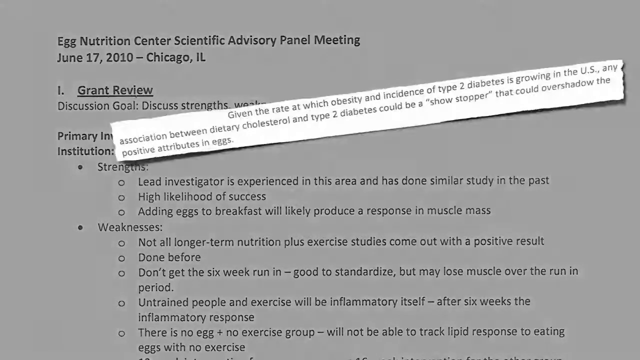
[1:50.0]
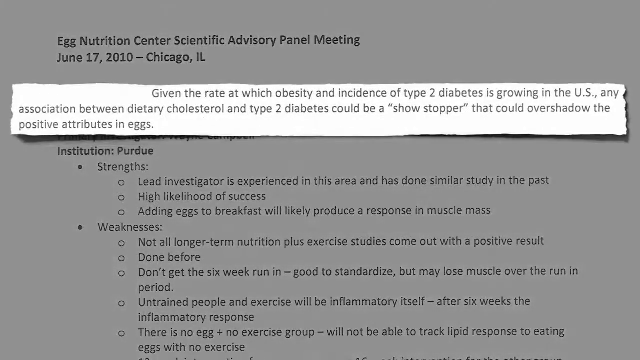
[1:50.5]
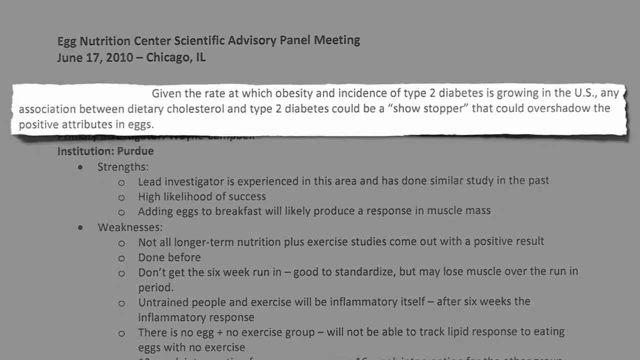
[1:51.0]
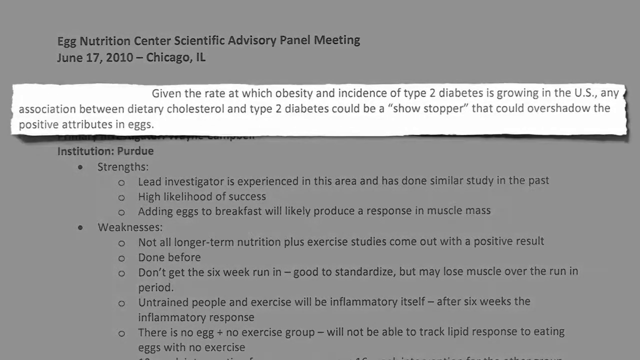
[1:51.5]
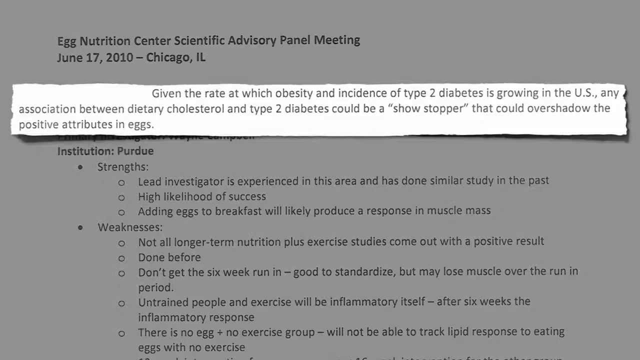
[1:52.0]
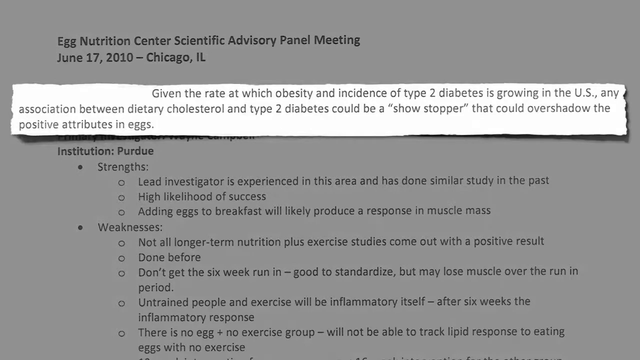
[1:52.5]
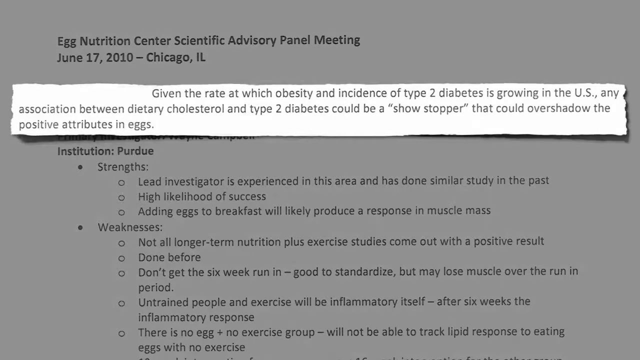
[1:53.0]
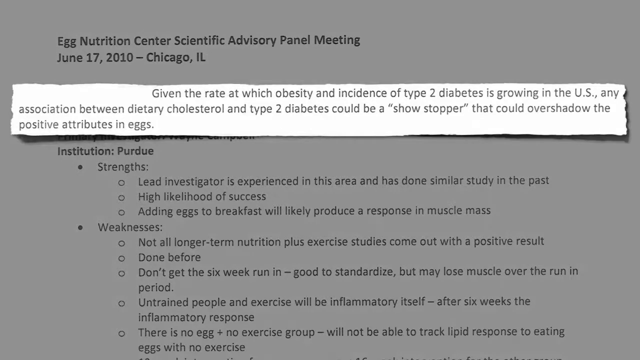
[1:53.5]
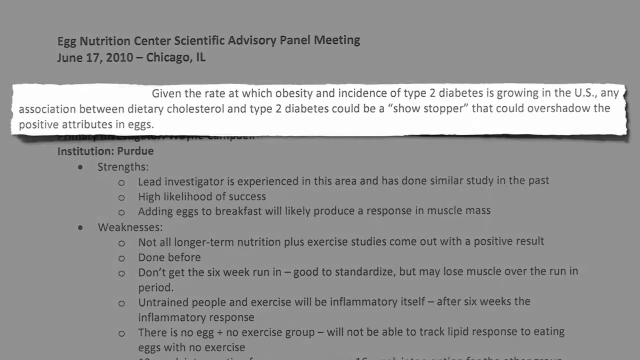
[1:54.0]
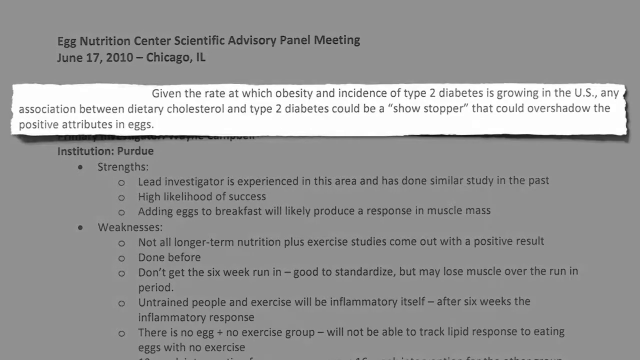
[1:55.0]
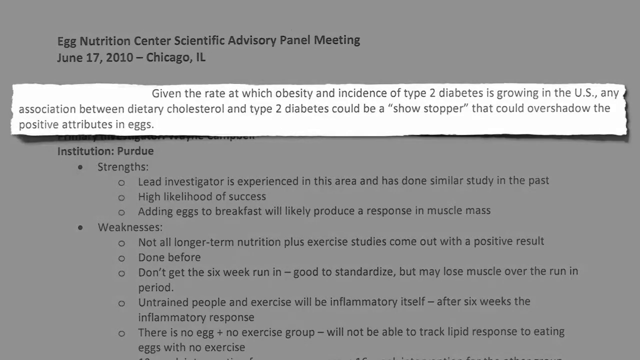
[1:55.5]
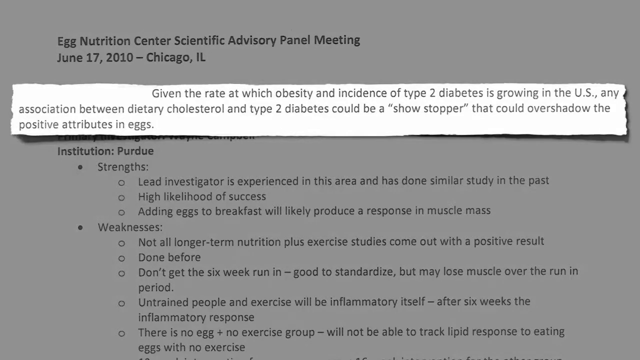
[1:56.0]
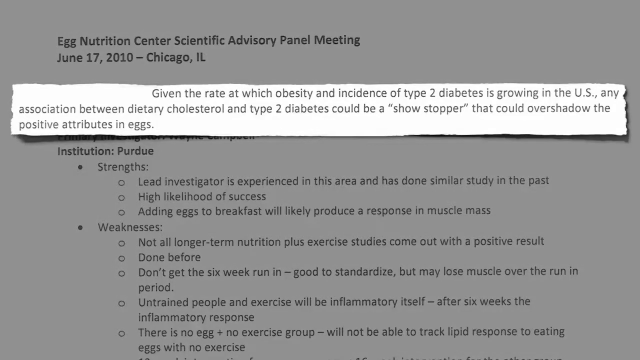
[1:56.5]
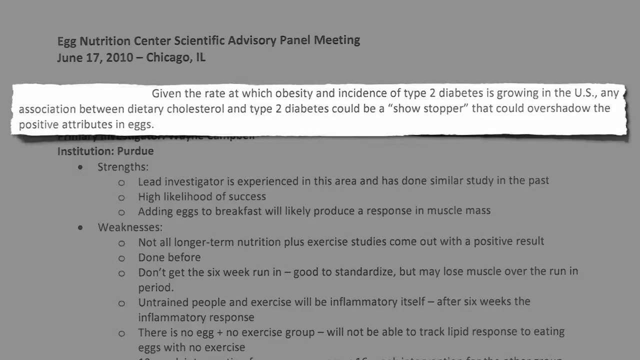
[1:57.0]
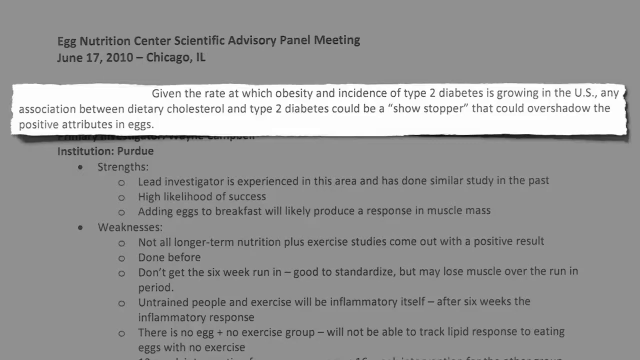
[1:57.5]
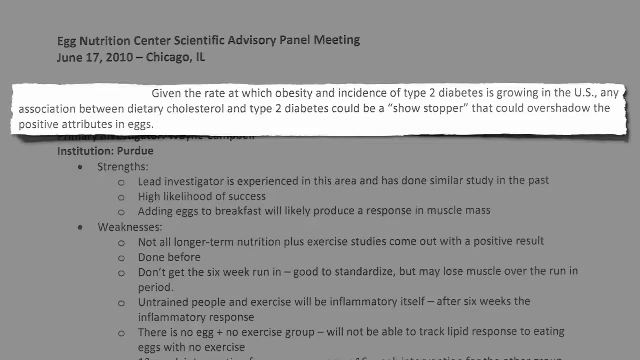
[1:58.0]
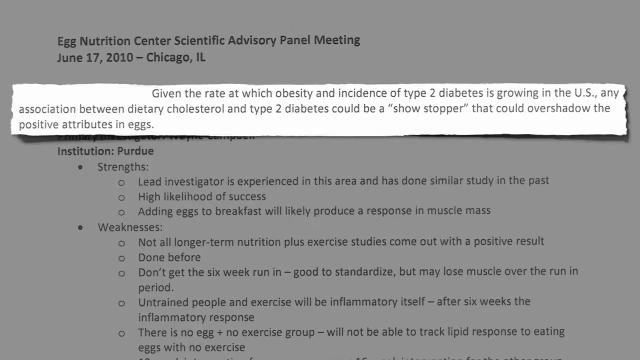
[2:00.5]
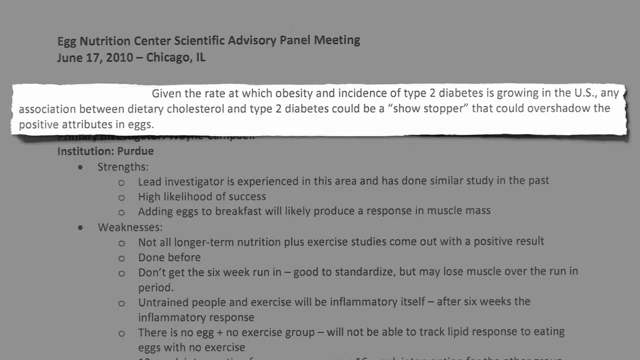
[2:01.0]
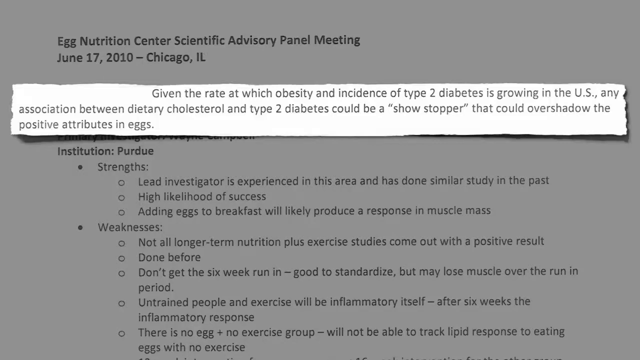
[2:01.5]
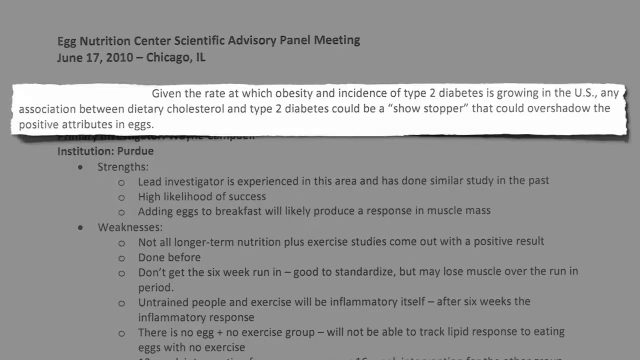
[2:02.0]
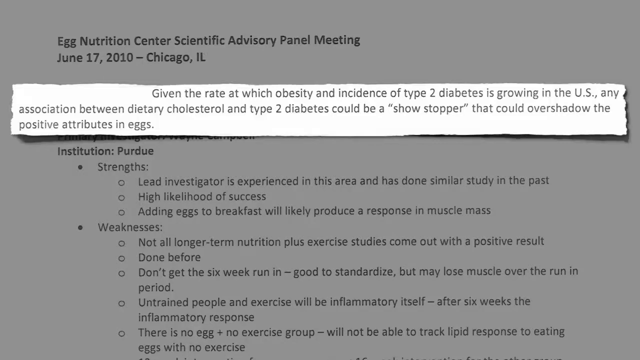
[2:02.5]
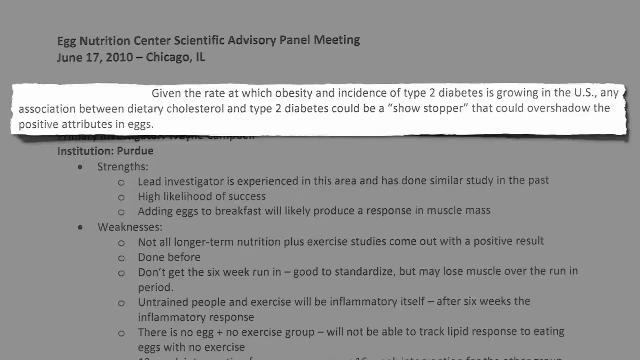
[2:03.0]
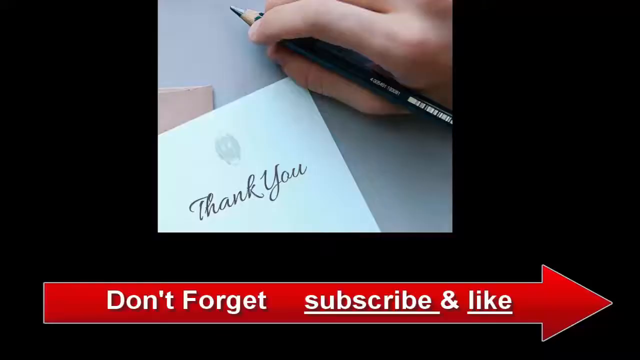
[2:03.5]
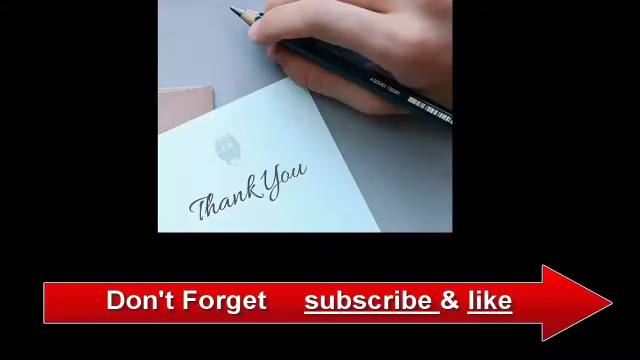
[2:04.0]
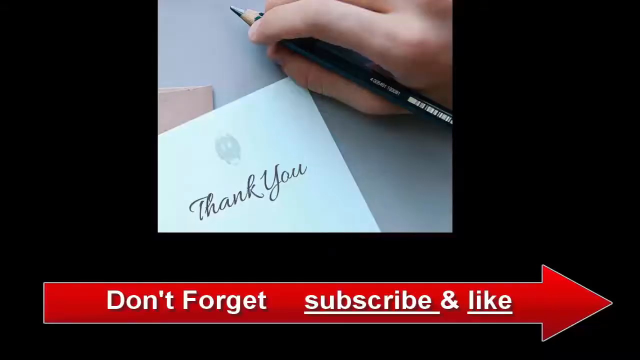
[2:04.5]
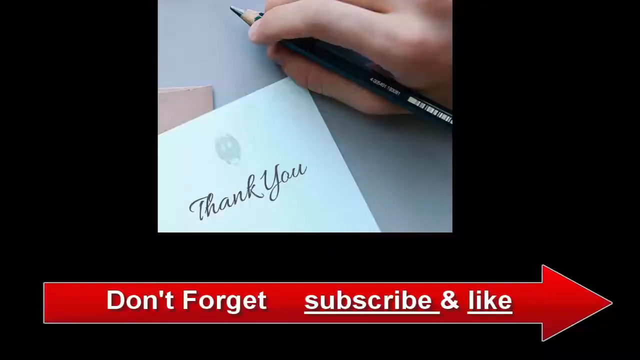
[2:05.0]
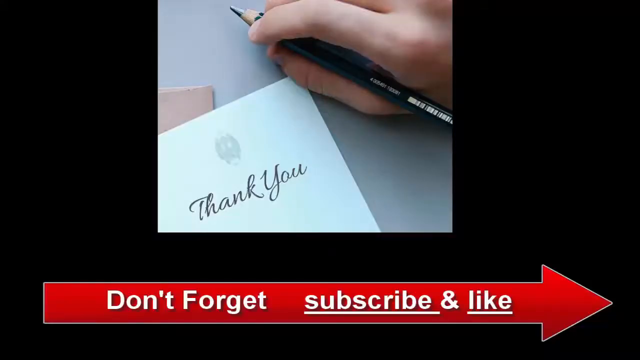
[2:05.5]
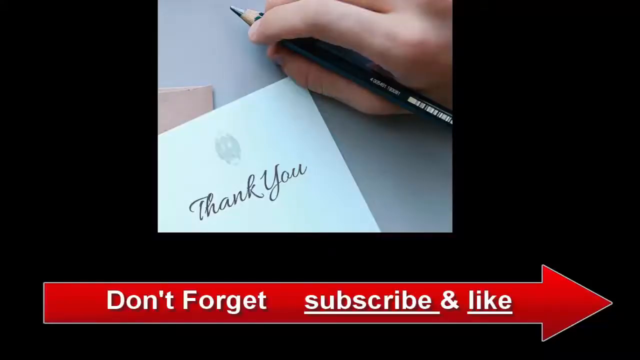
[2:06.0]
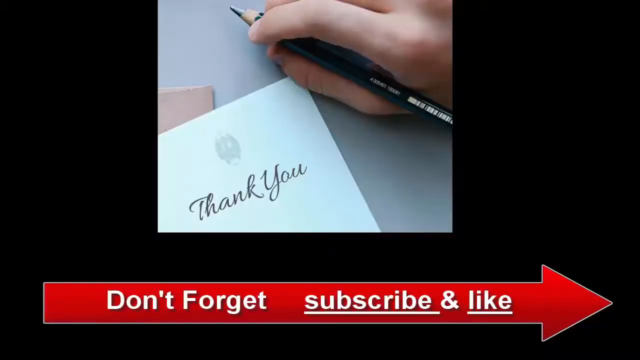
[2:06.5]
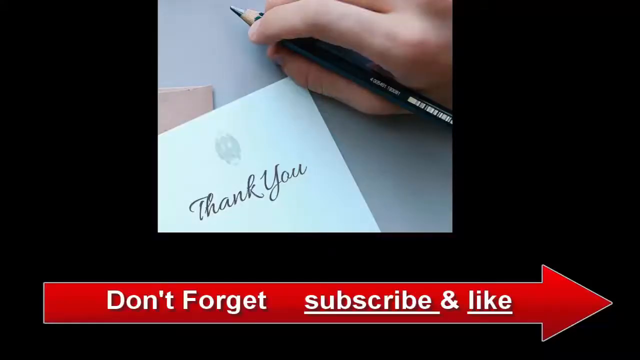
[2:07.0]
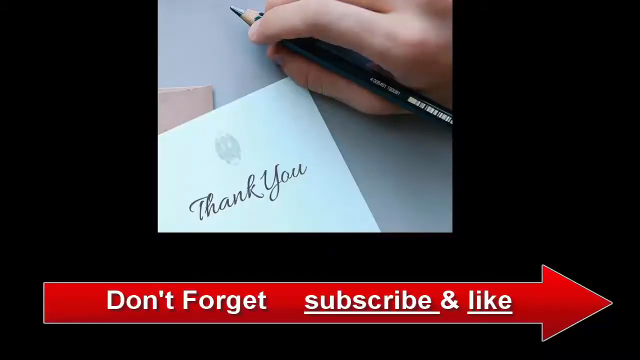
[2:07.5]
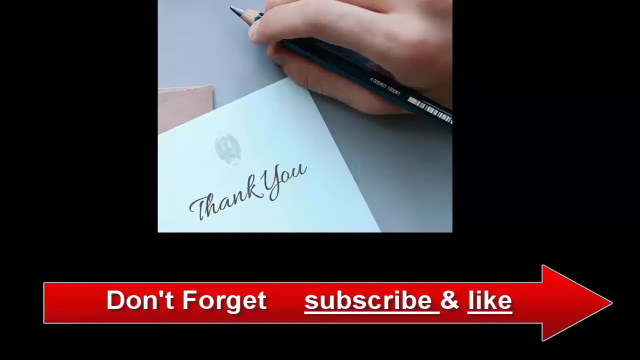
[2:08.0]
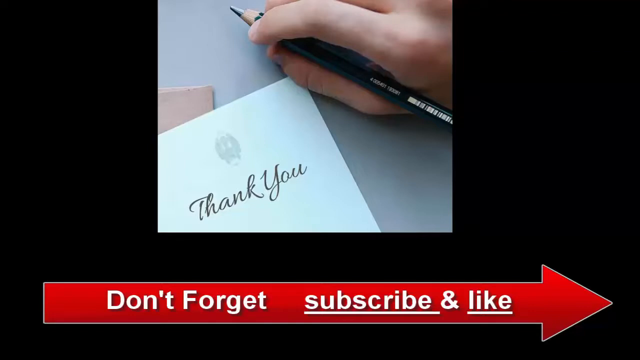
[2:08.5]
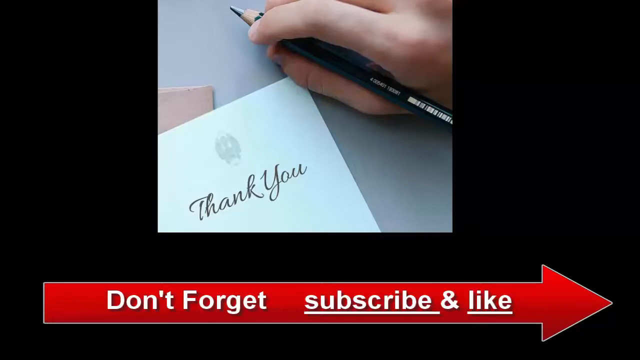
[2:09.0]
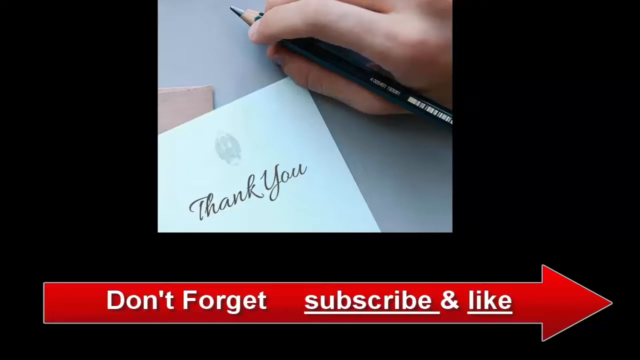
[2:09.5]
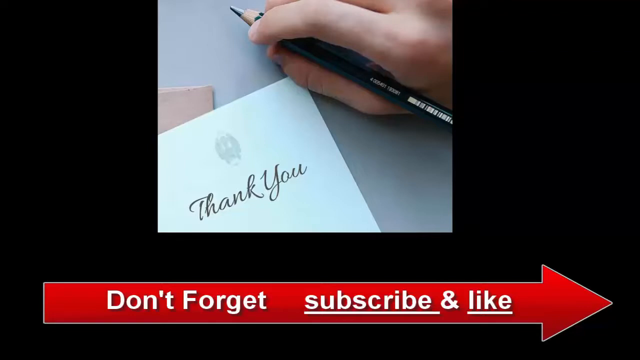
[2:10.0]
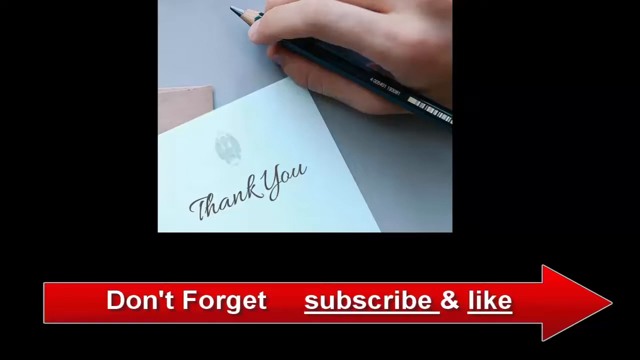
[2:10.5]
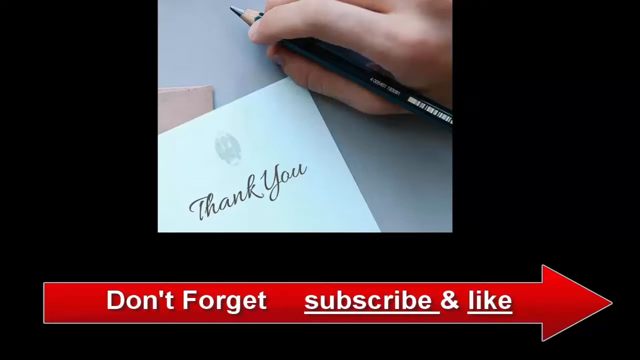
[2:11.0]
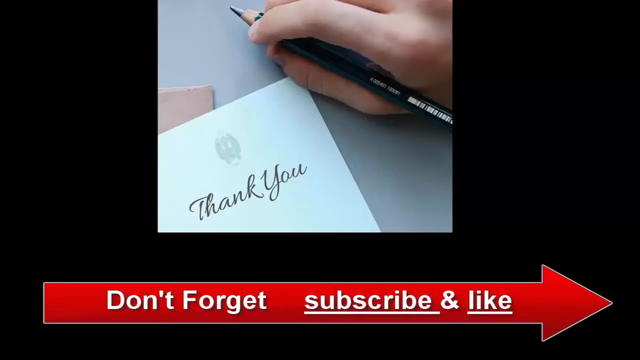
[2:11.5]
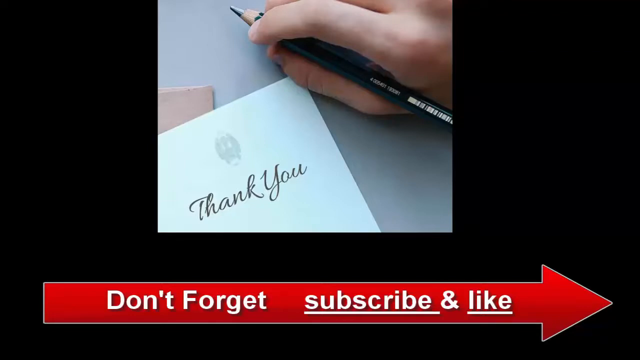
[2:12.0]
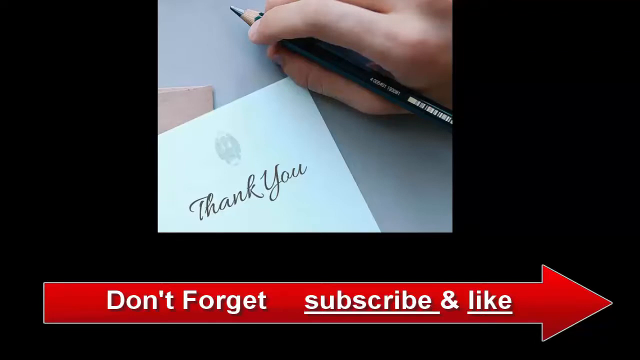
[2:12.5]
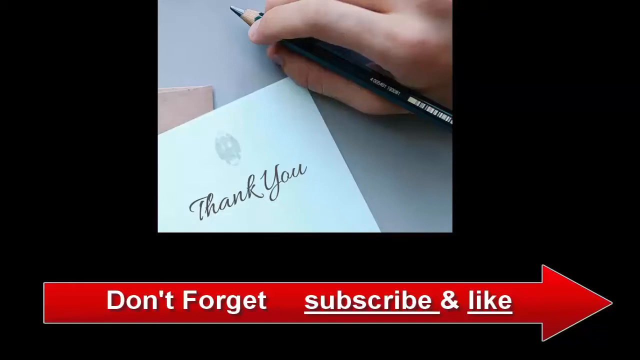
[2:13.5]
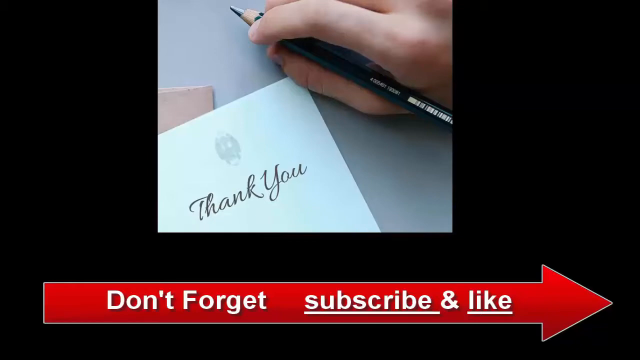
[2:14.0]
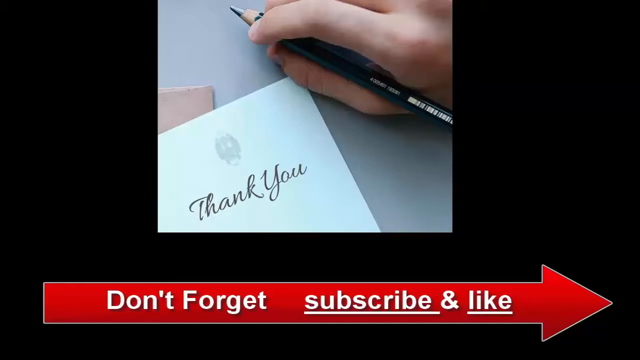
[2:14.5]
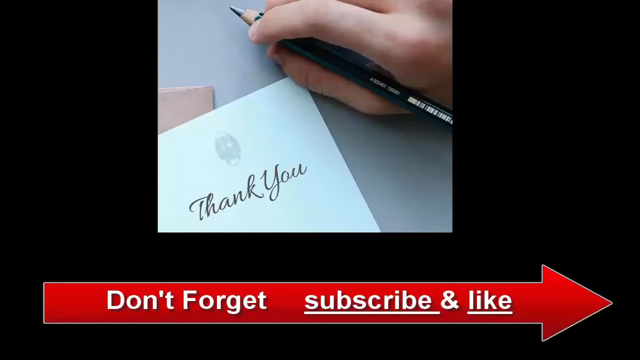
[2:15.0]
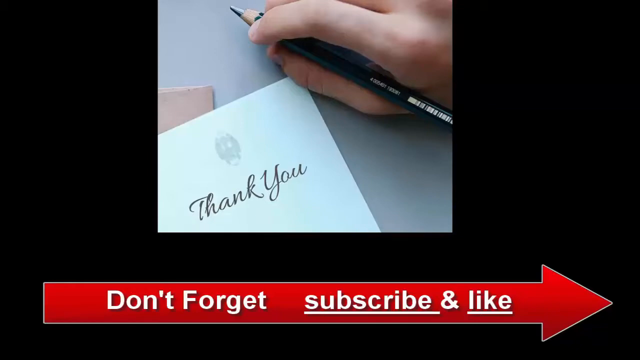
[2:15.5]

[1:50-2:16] The agenda for the Egg Nutrition Center Scientific Advisory Panel Meeting remains on screen, and a section at the top is enlarged in front, reading "Given the rate at which obesity and the incidence of type 2 diabetes is growing in the U.S, any association between dietary cholesterol and type 2 diabetes could be a showstopper that could overshadow the positive attributes in eggs." The whole scene then changes to the end of the video: the background is black in the center, and at the top there is a large picture of a hand that has just written a thank-you note, holding a black pencil between the thumb and index finger. A white card reads "thank you" in the center. At the bottom, the words "don't forget, subscribe, and like" appear on top of a long red arrow pointing to the right side.